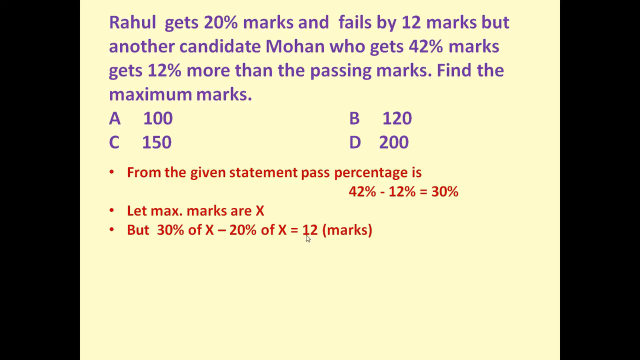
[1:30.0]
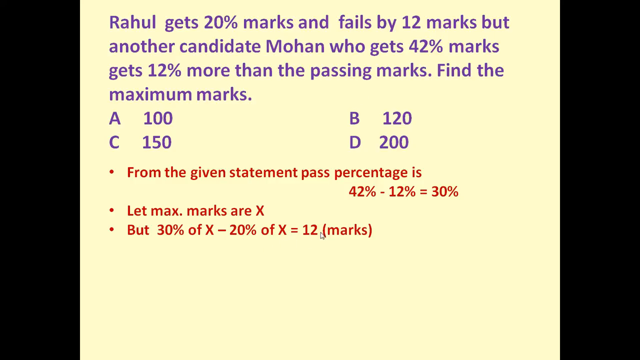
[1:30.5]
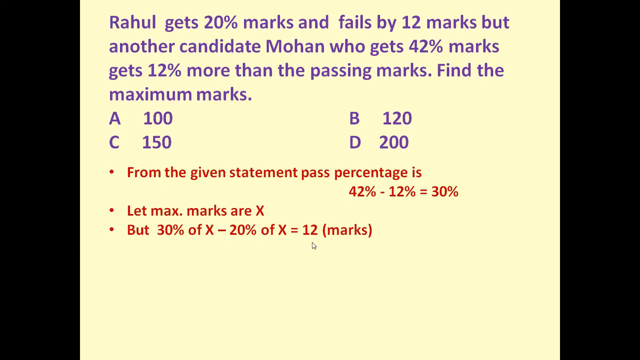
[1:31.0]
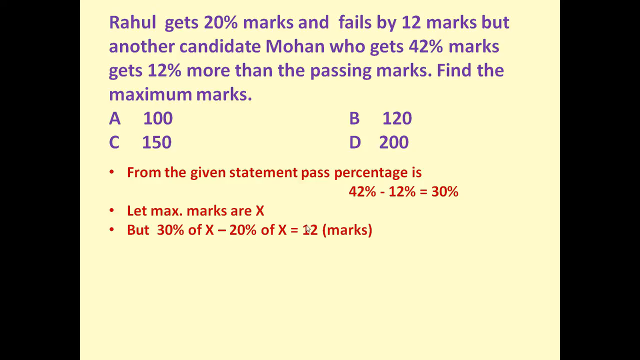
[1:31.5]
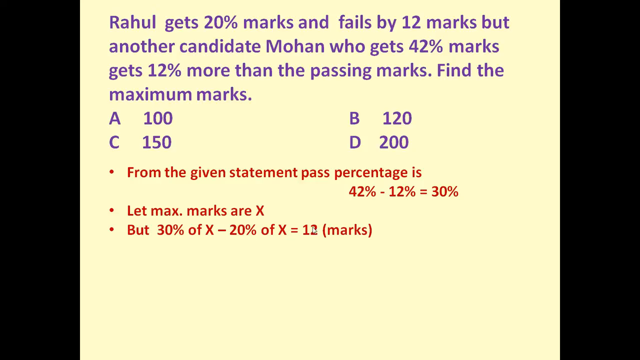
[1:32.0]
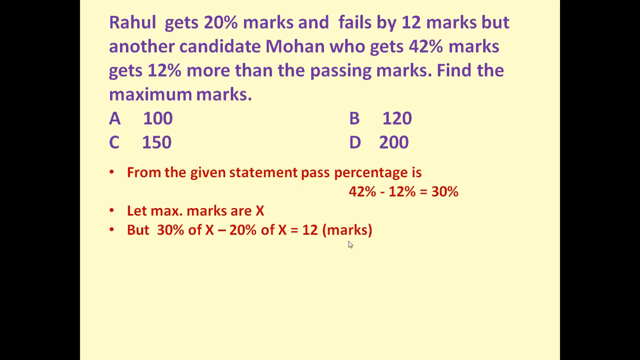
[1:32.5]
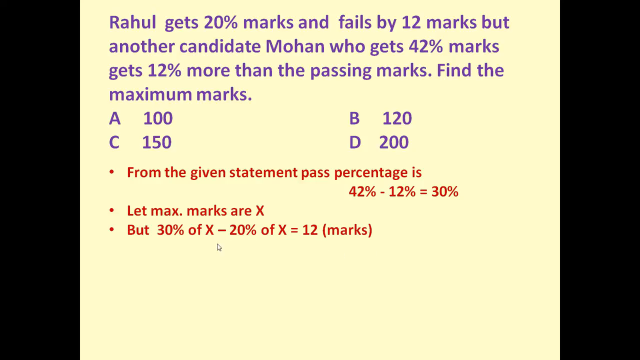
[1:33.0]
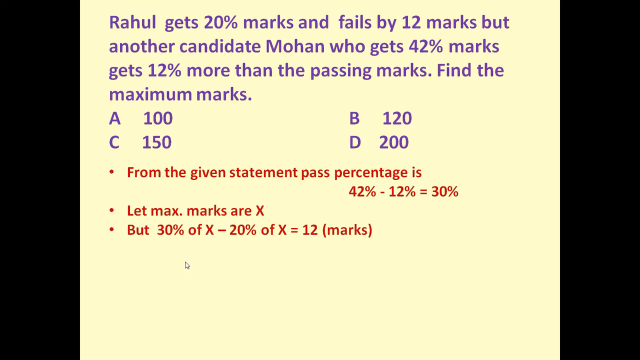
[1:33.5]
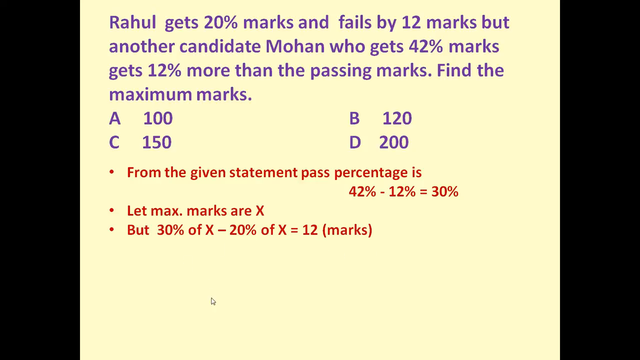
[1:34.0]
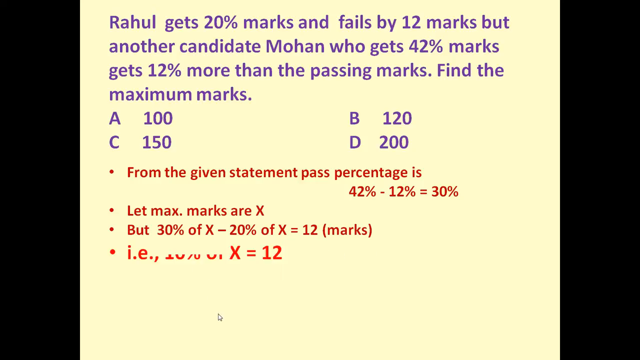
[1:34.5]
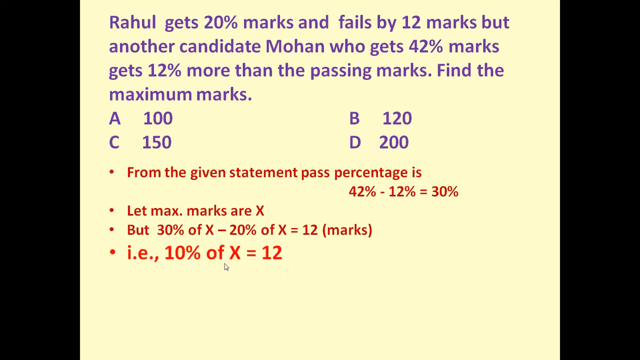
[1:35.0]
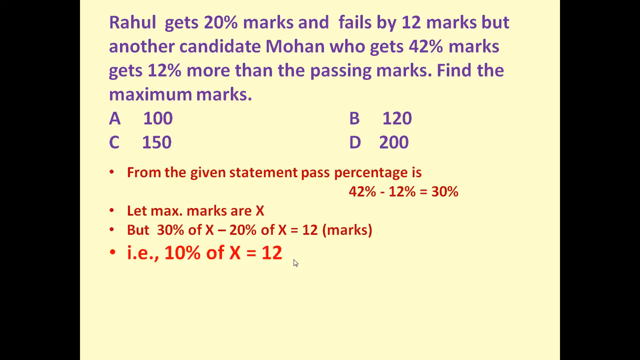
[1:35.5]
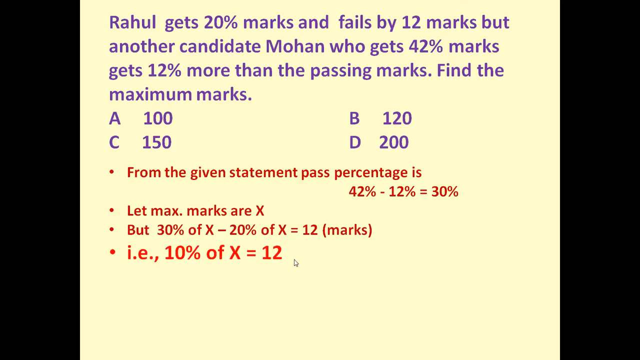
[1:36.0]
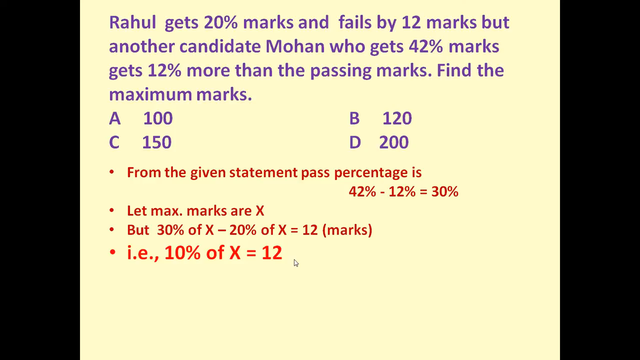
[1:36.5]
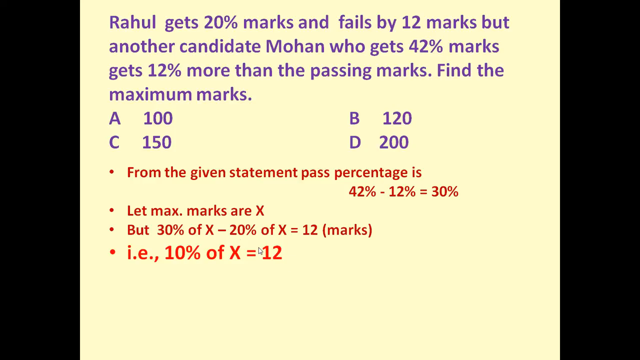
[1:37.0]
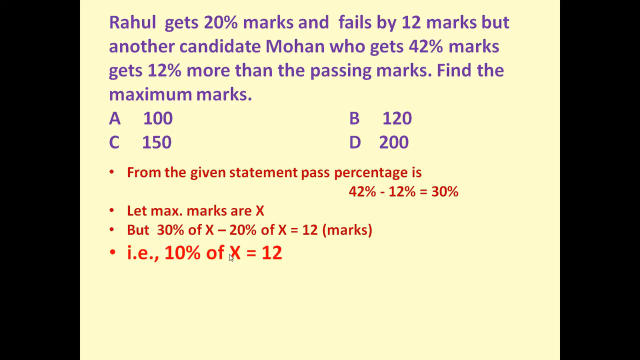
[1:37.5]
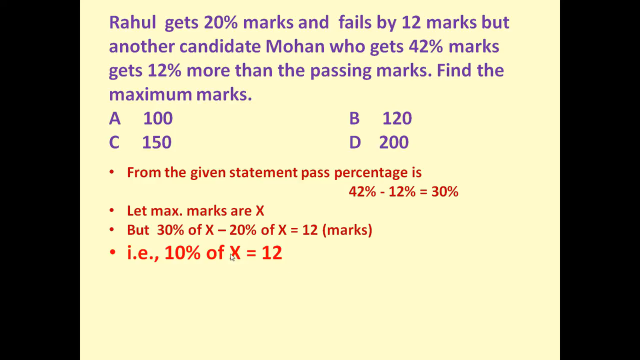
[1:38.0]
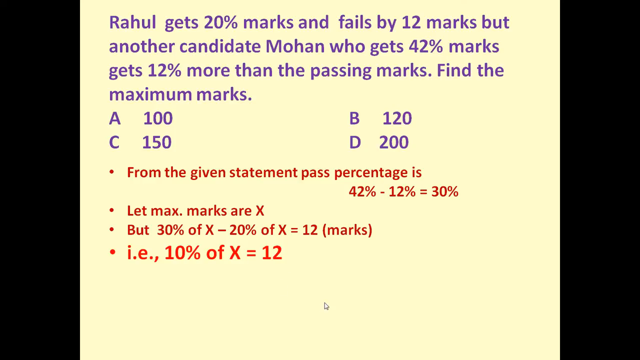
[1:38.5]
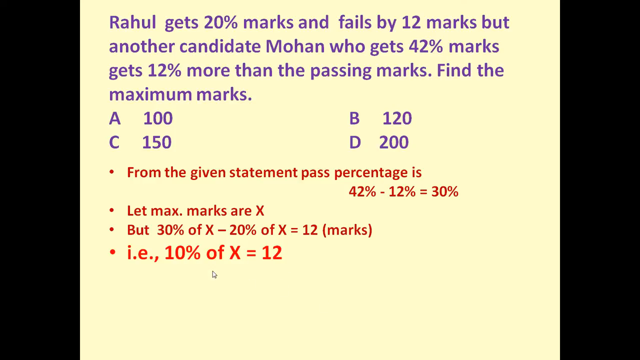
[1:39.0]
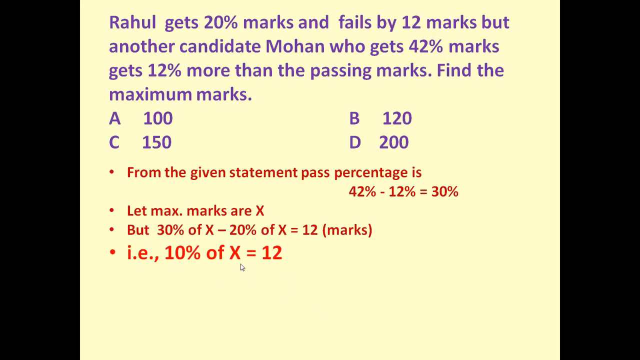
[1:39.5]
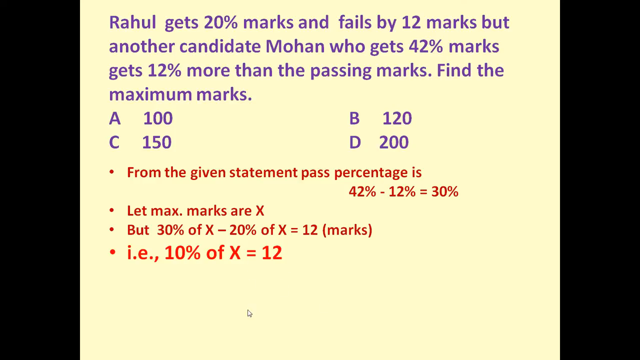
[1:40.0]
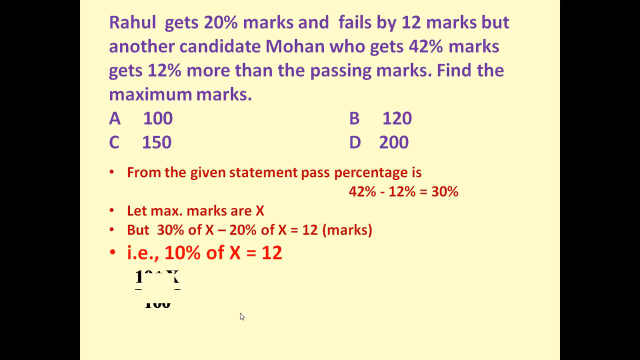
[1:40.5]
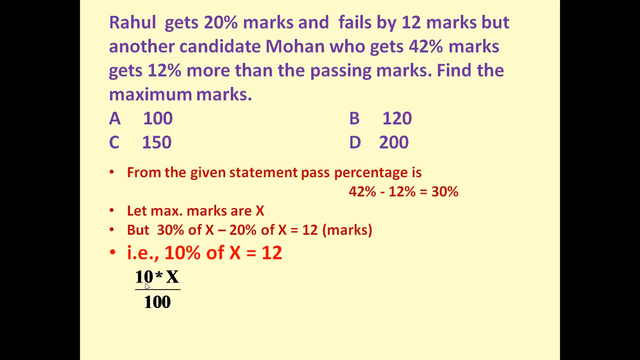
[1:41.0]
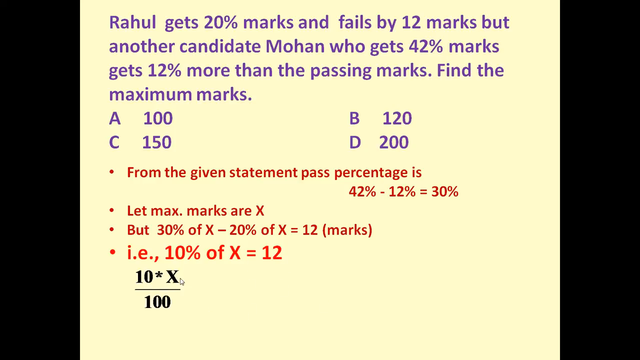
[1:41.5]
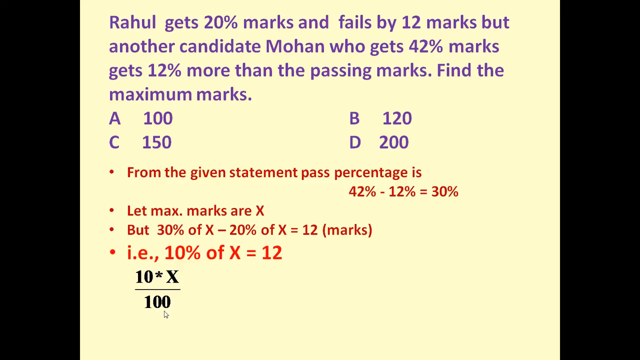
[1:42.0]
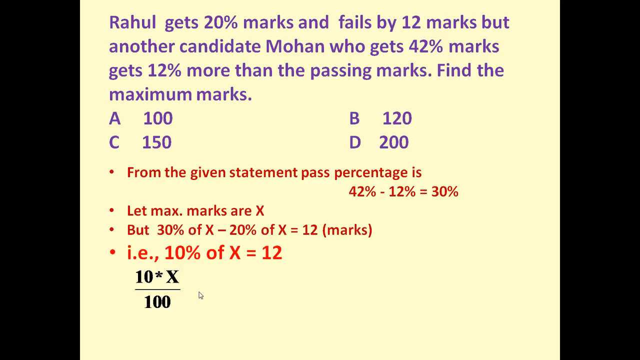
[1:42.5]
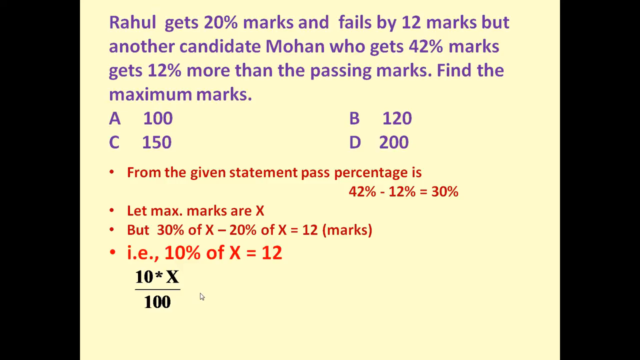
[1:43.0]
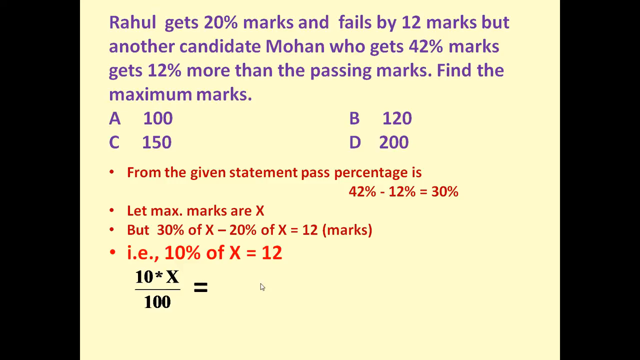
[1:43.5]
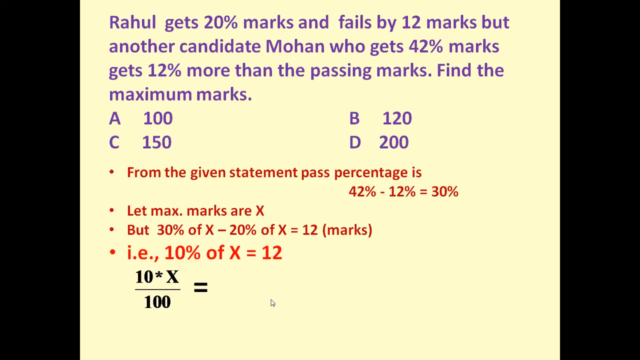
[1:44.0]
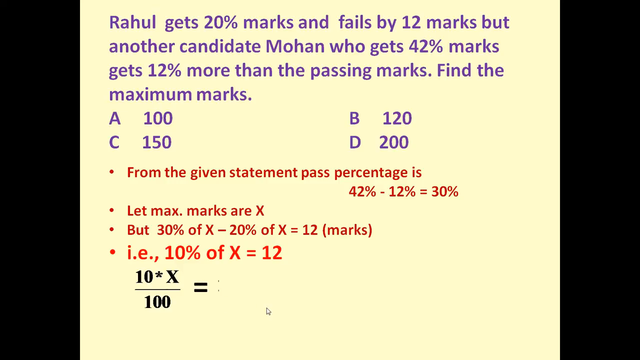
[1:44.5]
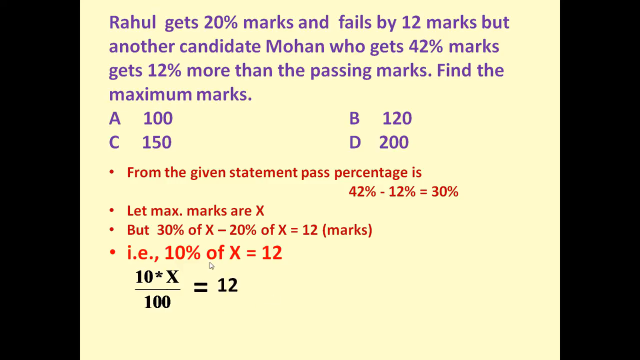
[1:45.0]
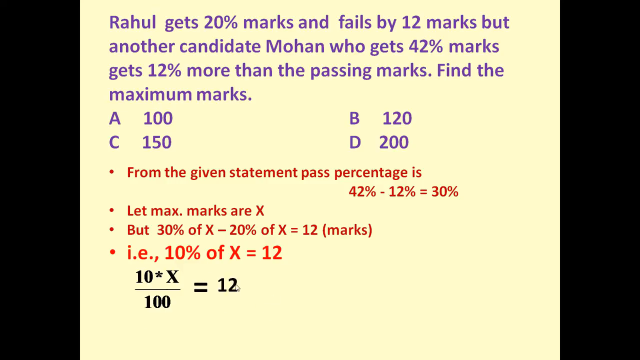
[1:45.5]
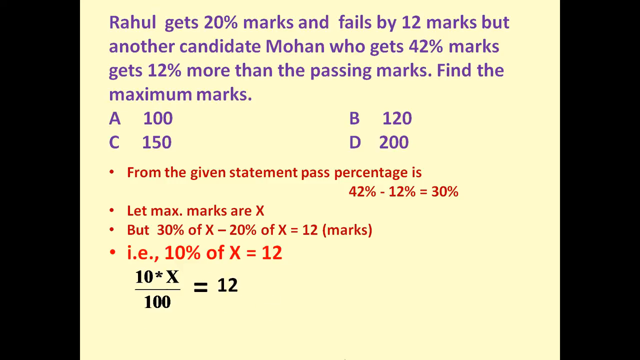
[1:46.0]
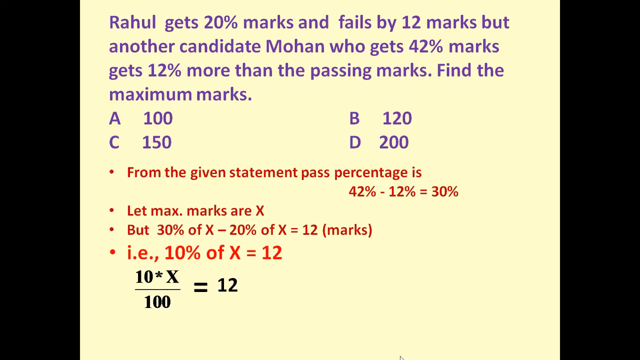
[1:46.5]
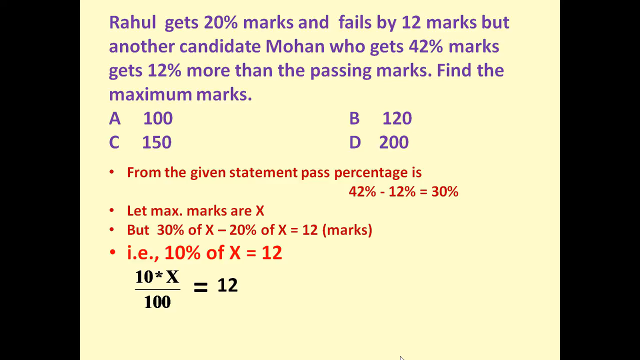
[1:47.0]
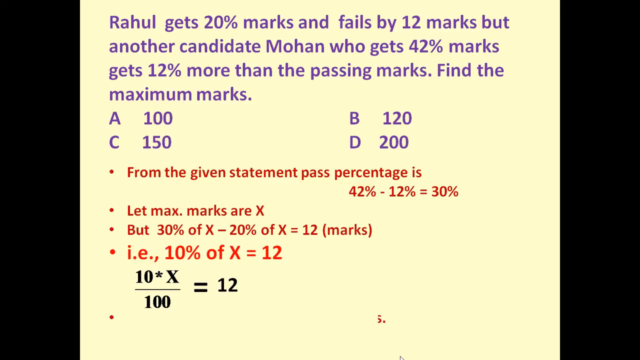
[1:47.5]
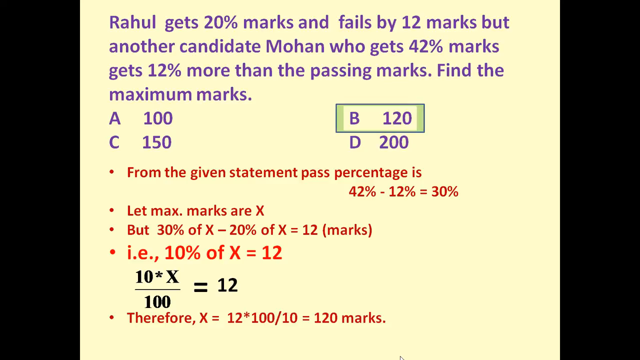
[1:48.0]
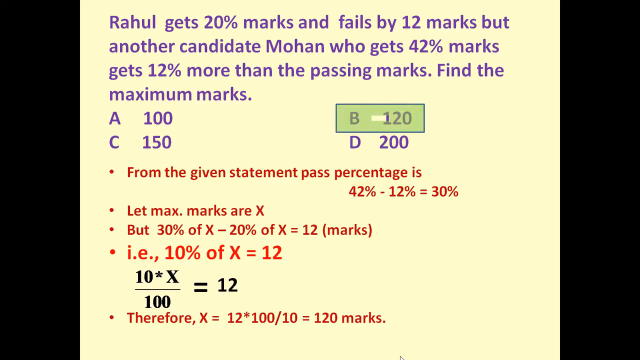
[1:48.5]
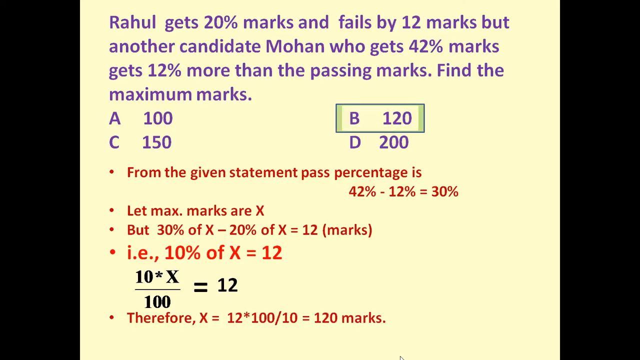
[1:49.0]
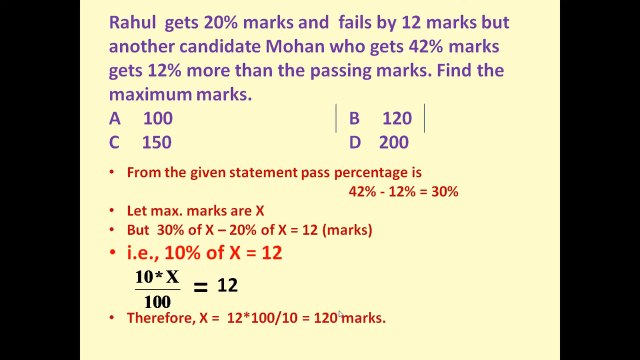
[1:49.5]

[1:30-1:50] The problem and its four options (A 100, B 120, C 150, D 200) are shown, and the full solution is worked through. Mohan passes and Raul fails; from Mohan's 42% being 12% more than the passing marks, the pass percentage is 42% minus 12% equals 30%. With X as the maximum marks, 30% of X minus 20% of X equals 12, the marks Raul failed by. This gives 10% of X equals 12, written as 10 multiplied by X divided by 100 equals 12. Therefore X equals 12 multiplied by 100 divided by 10, which equals 120 marks: answer B, 120 marks.